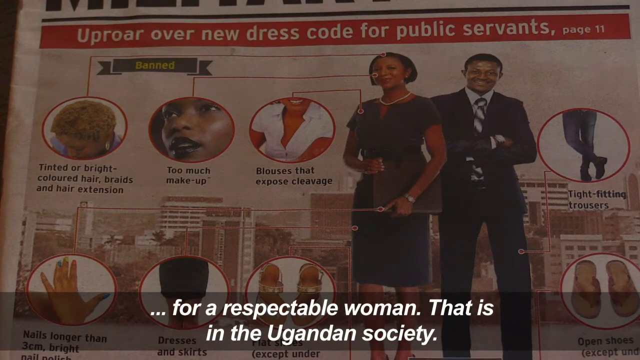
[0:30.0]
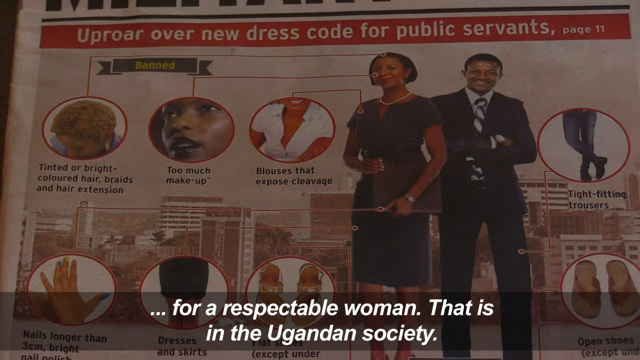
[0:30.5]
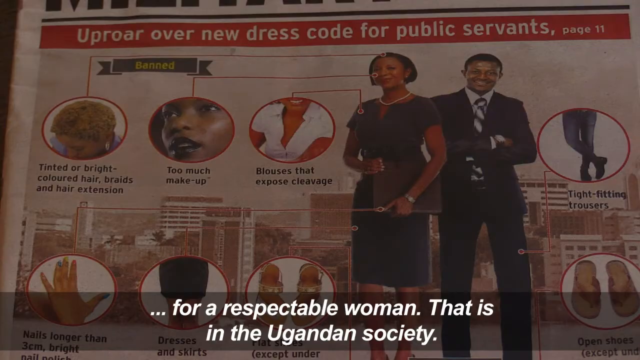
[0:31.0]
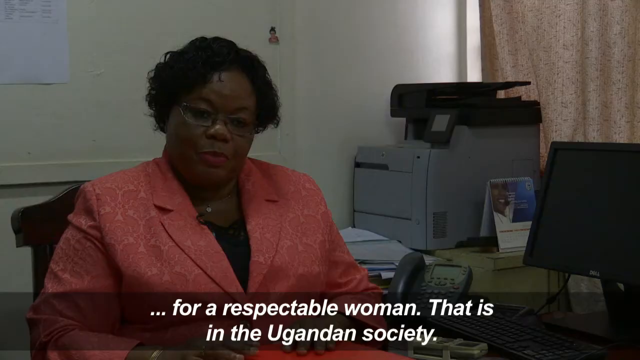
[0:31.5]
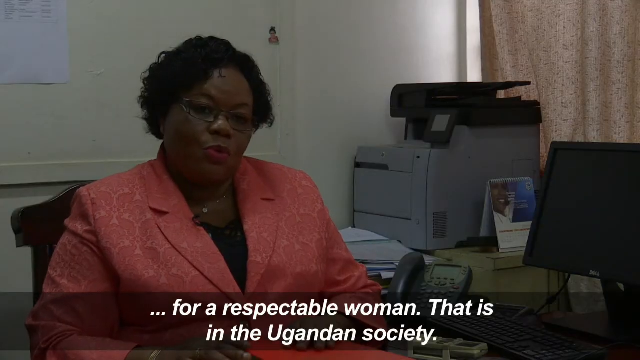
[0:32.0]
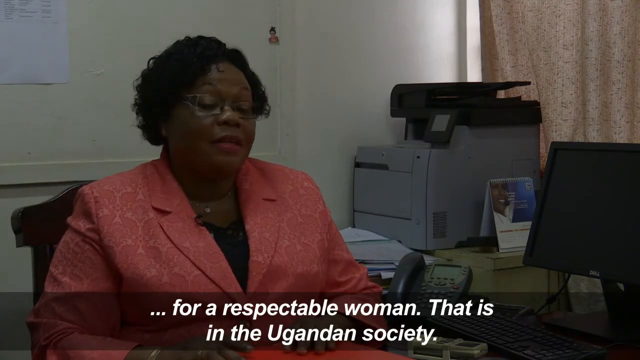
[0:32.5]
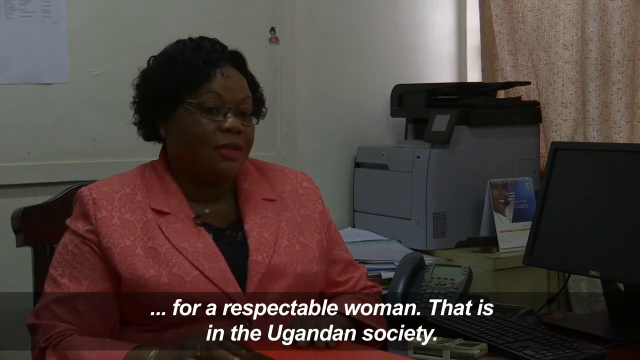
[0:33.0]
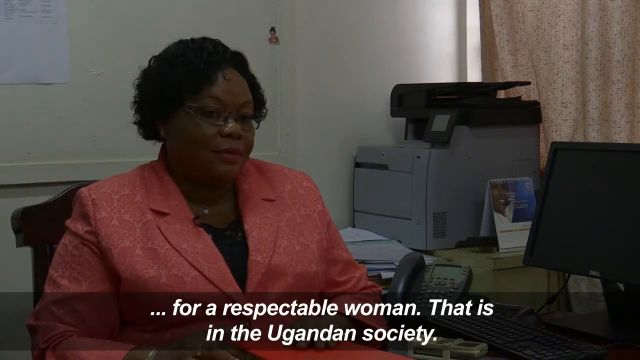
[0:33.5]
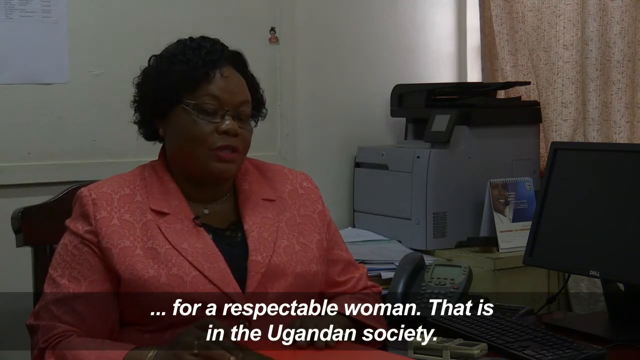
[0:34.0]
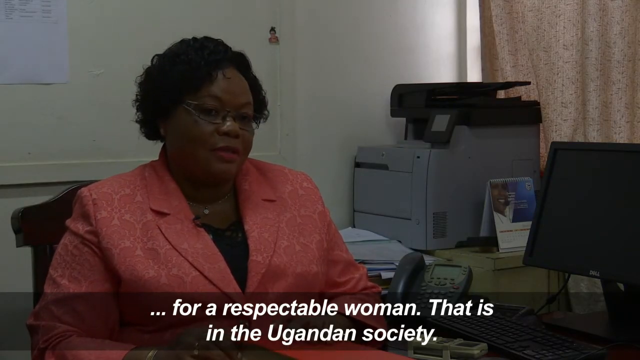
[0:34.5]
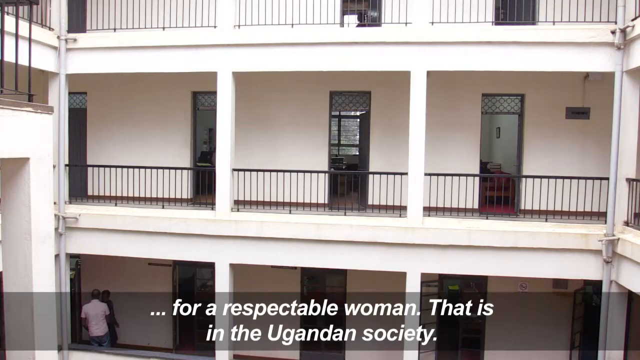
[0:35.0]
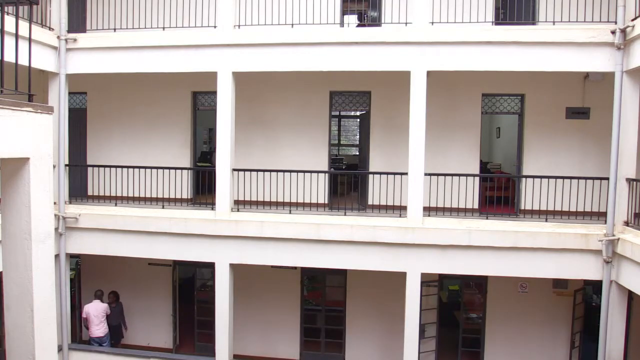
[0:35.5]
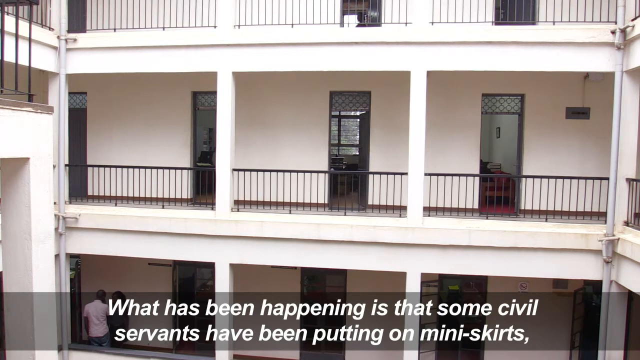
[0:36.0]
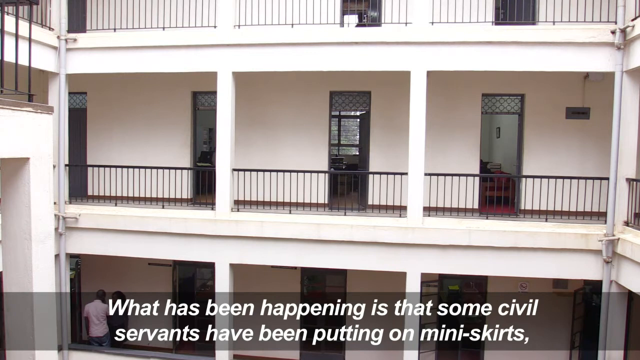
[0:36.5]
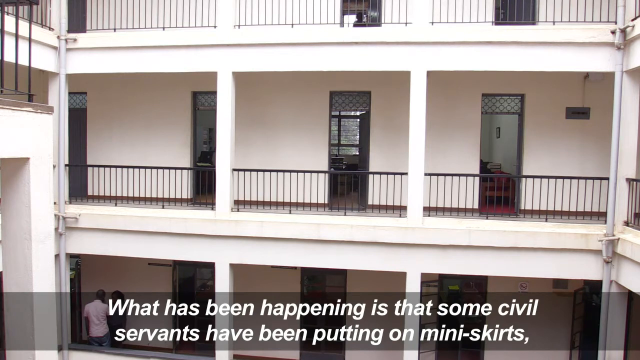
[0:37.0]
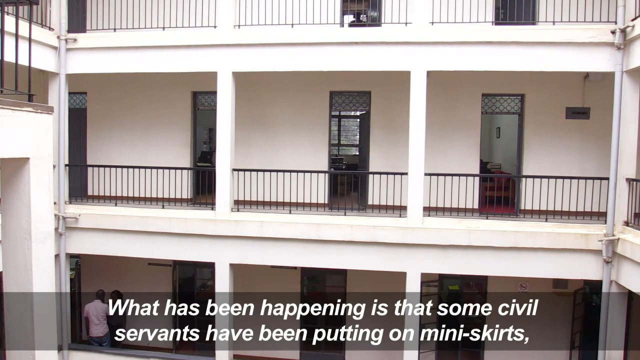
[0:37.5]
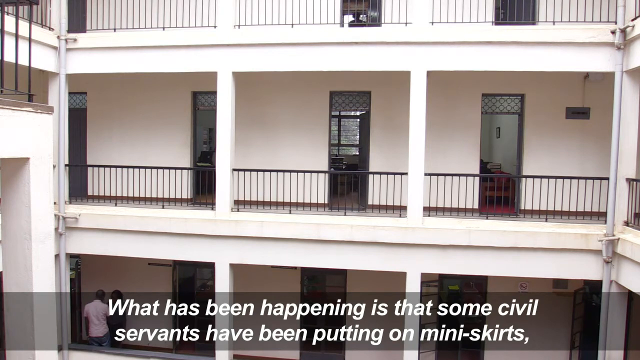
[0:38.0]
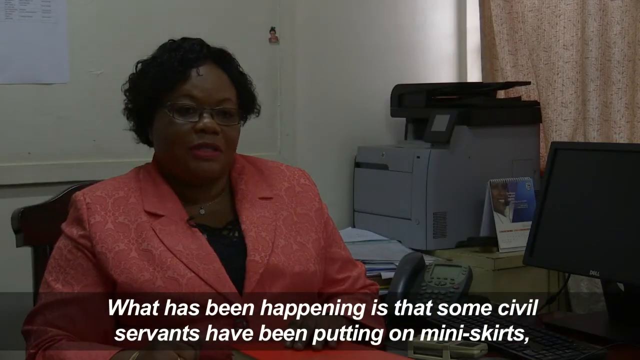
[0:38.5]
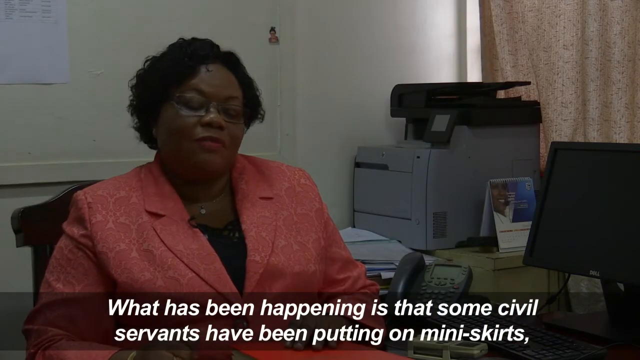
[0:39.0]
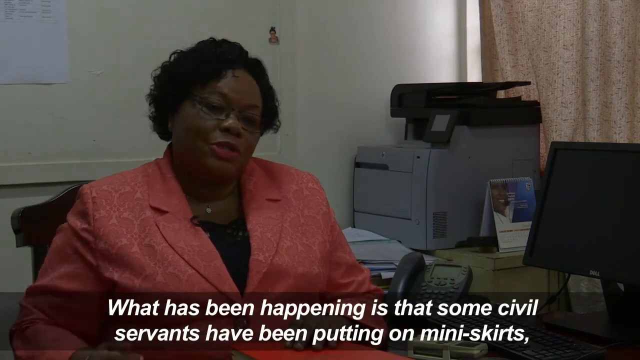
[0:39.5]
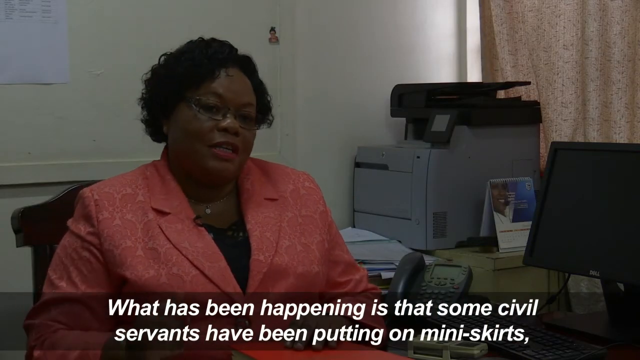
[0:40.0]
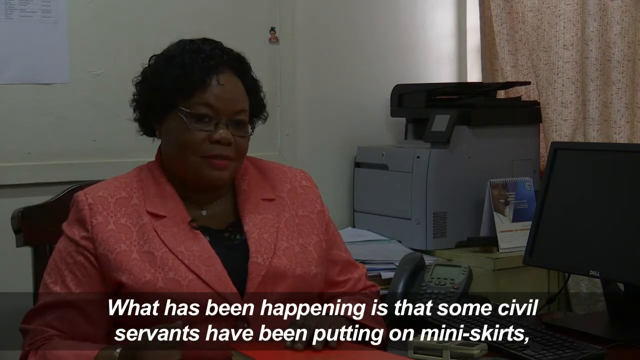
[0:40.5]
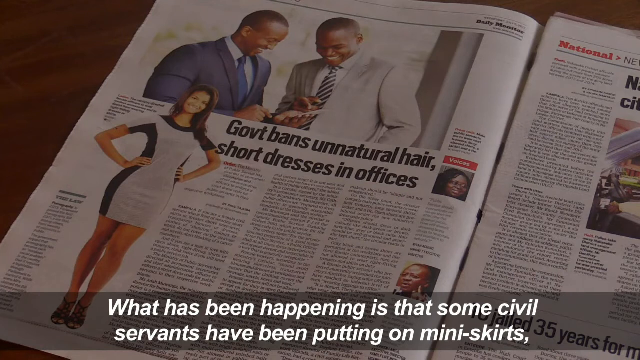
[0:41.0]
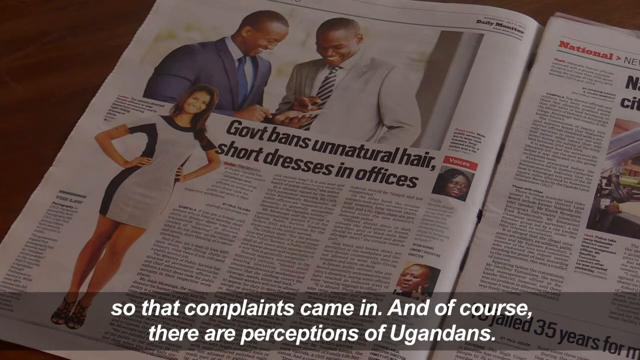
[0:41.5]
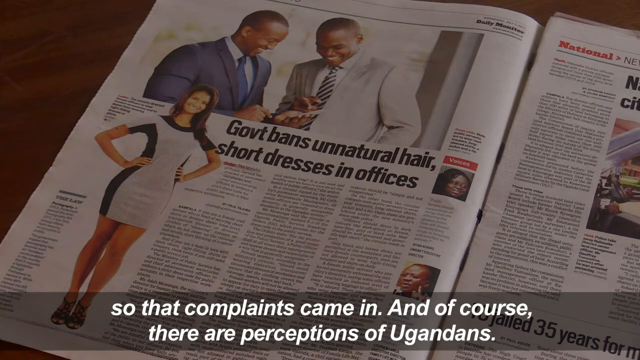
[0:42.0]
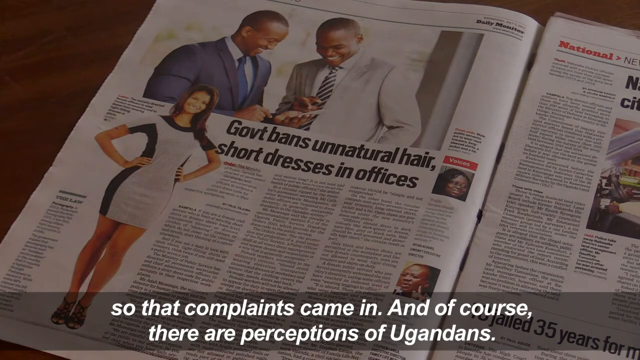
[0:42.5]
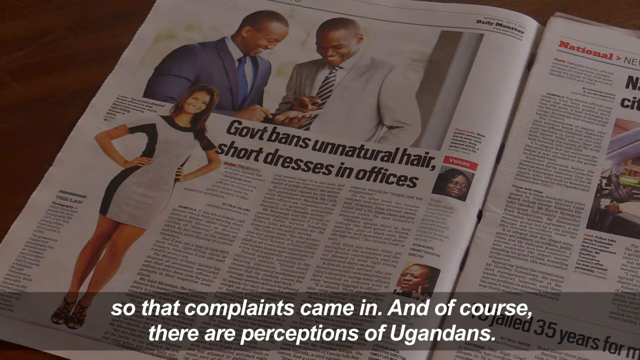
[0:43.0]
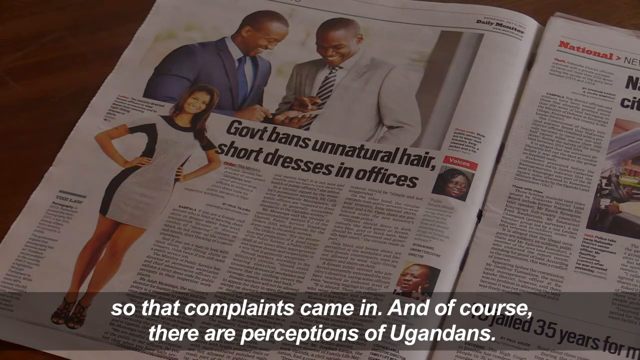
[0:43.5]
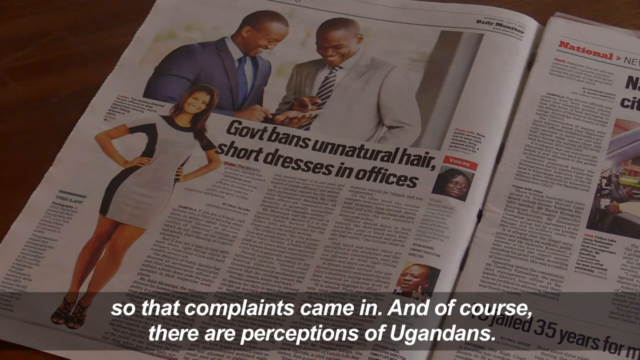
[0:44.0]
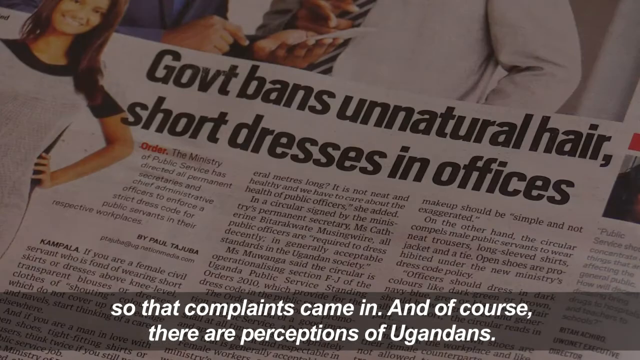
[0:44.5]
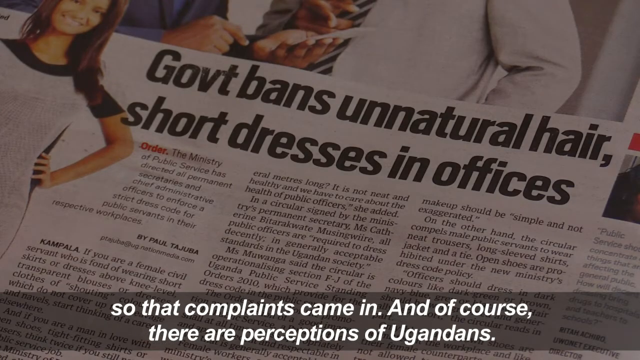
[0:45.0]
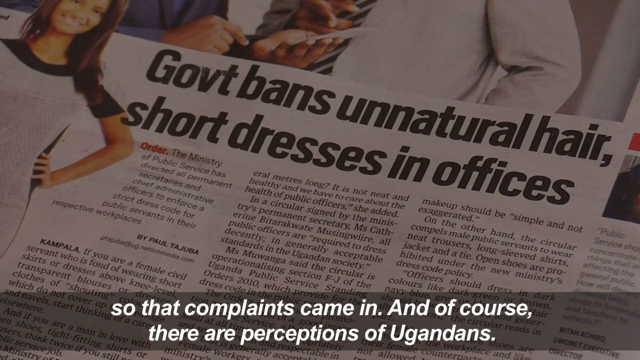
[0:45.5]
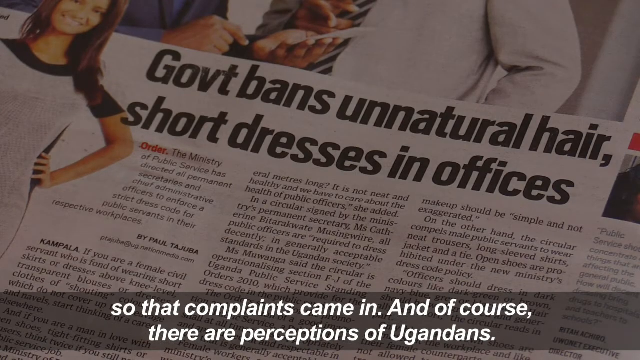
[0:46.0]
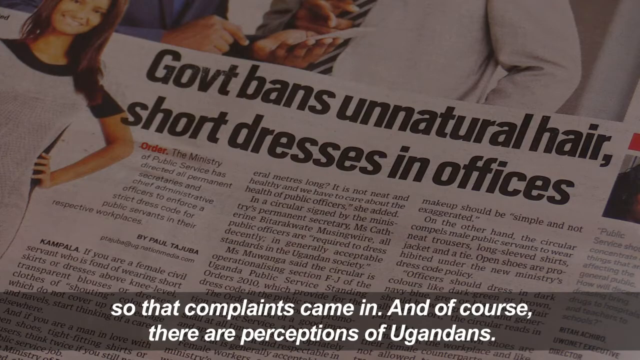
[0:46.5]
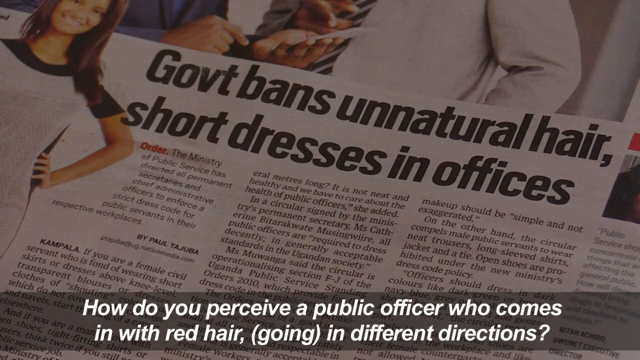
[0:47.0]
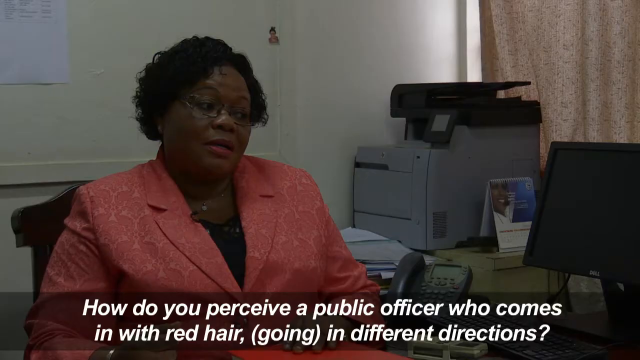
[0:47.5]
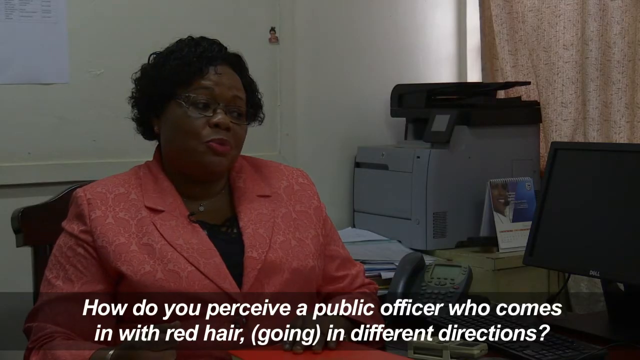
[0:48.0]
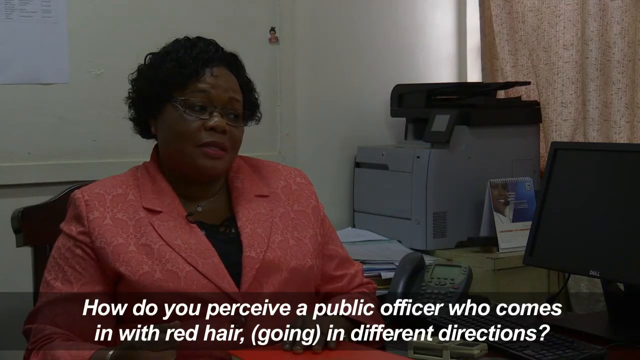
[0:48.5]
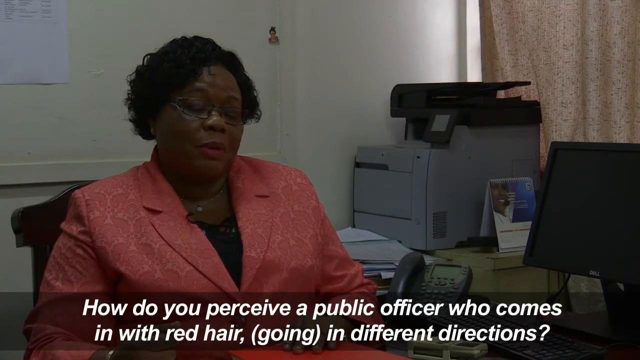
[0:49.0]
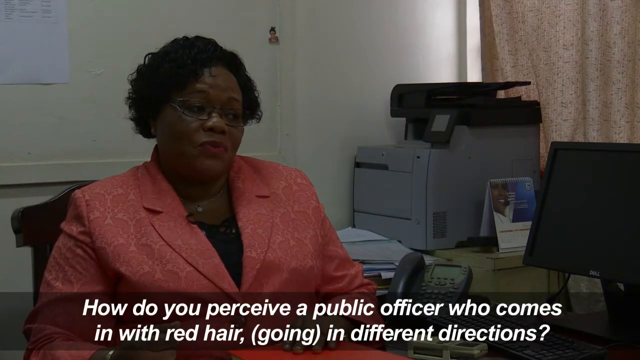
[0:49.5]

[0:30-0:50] The second newspaper addresses the uproar over a new dress code for public service. It lists several dress code items, such as "Too Much Makeup", "Blouses that expose cleavage", "Tinted or bright colored Hair", "Braids" and "Hair Extension", and shows a couple of samples of these things. What looks like an apartment building or an office block appears, with two individuals at the bottom of the three-story building. The woman in the office is shown again, making a movement with her right hand. A page of the newspaper is then opened to an article by Paul Terjuba with the bold title "Government Bans Unnatural Hair Short Dresses in Office" and an image of a woman wearing a black and white dress. The view then returns to the woman in the office.